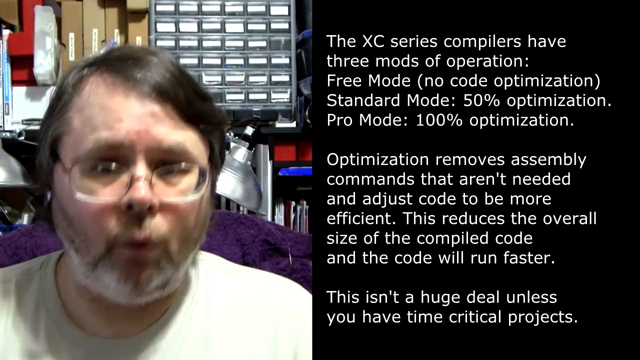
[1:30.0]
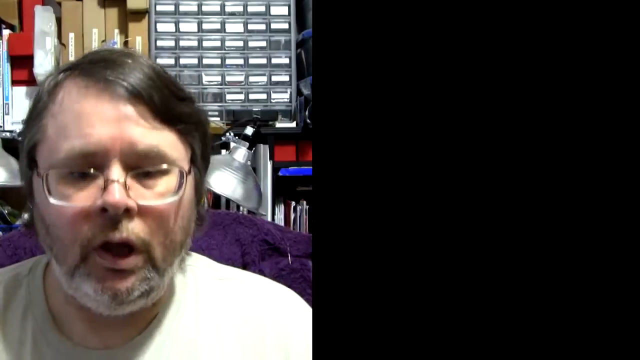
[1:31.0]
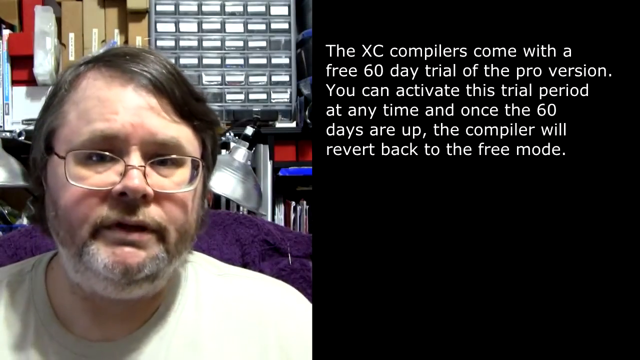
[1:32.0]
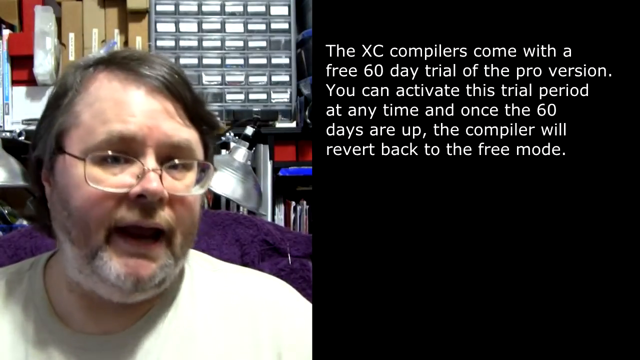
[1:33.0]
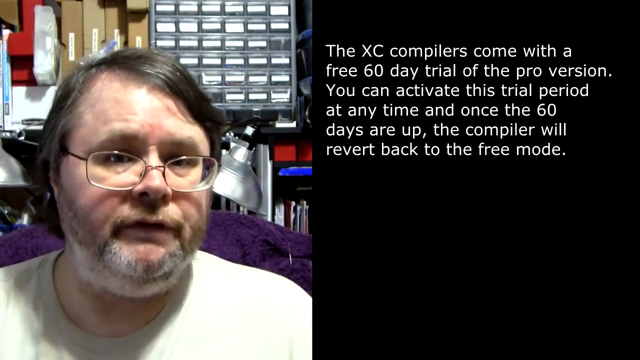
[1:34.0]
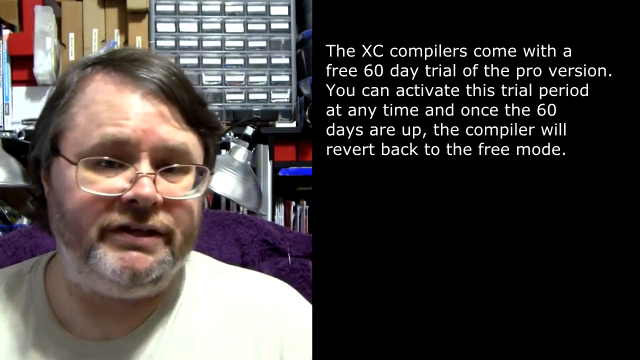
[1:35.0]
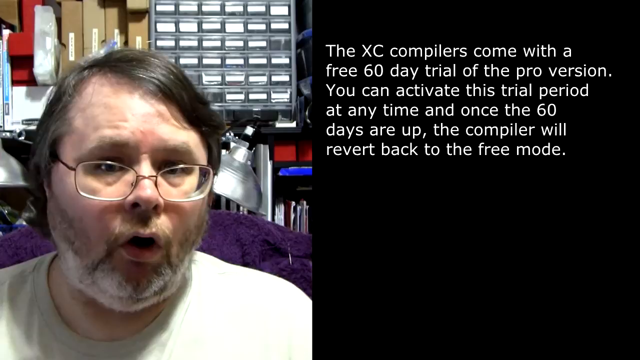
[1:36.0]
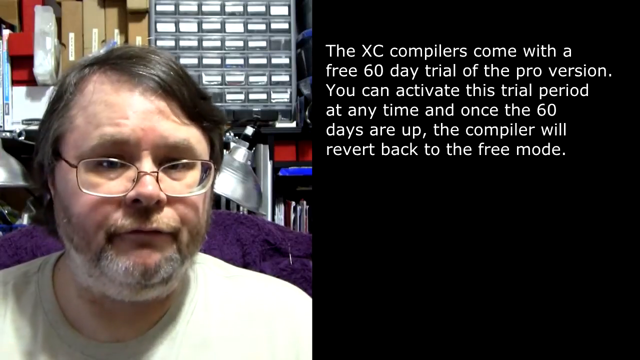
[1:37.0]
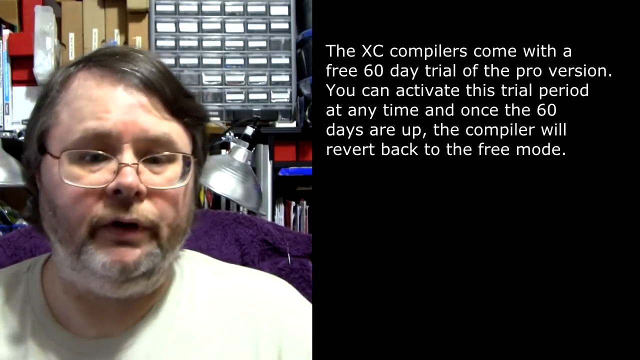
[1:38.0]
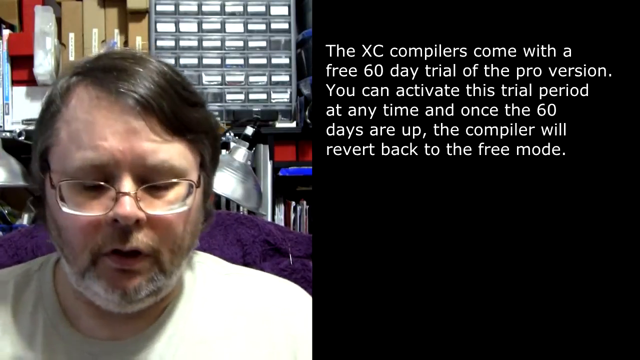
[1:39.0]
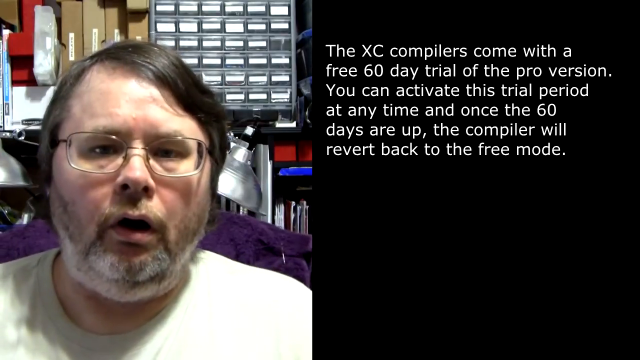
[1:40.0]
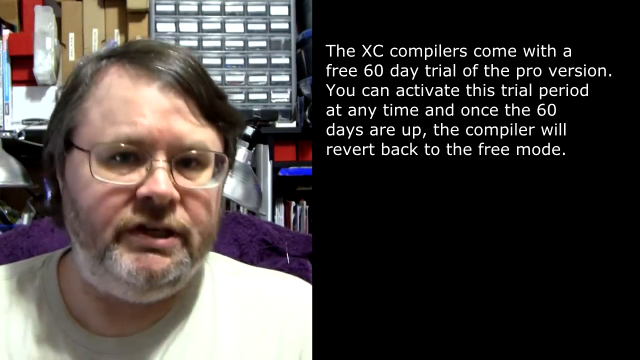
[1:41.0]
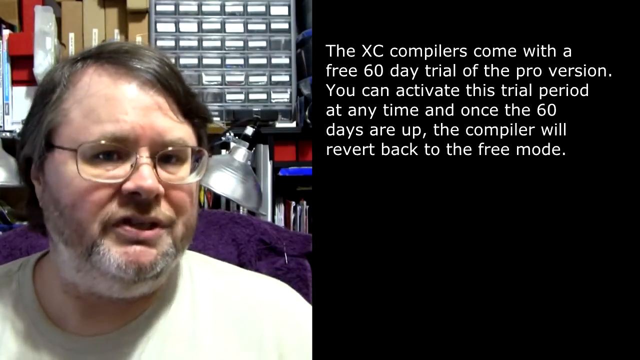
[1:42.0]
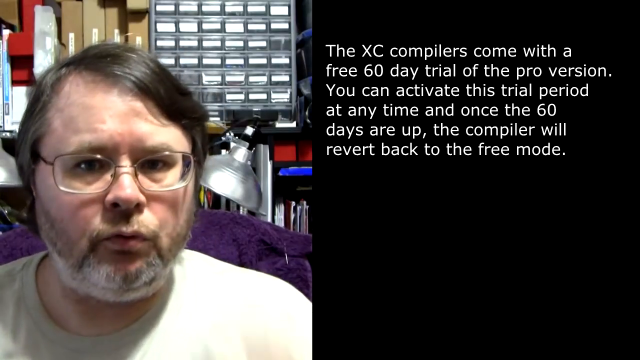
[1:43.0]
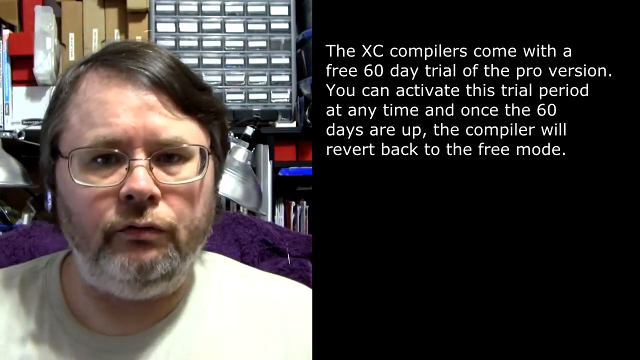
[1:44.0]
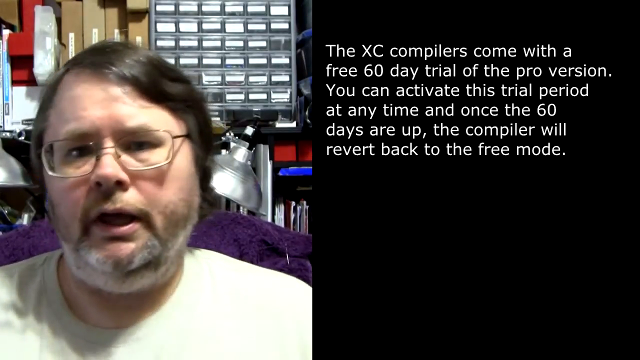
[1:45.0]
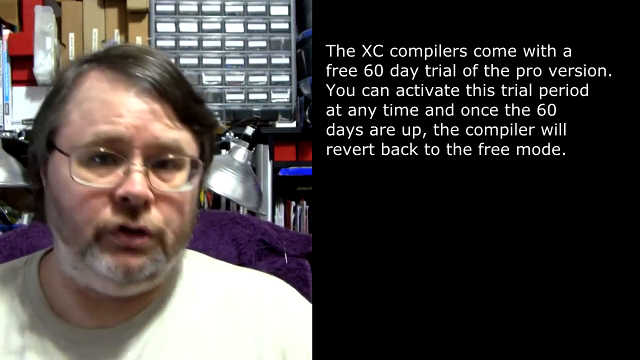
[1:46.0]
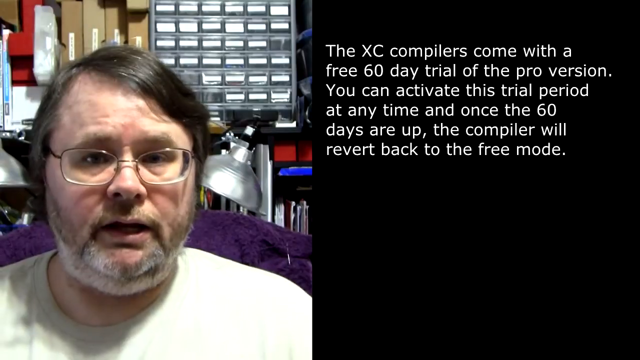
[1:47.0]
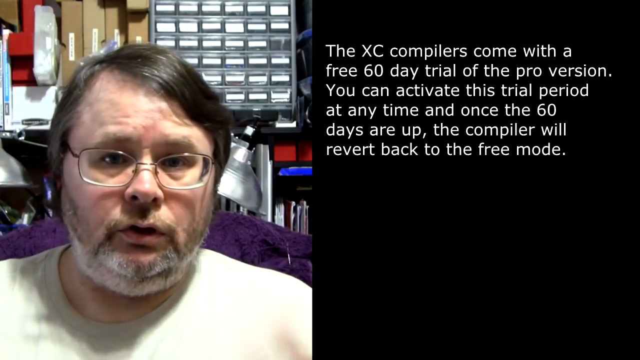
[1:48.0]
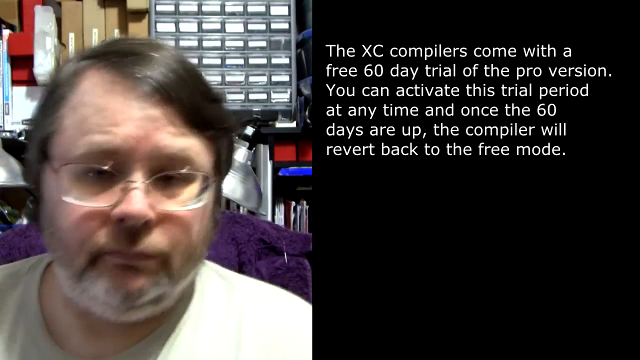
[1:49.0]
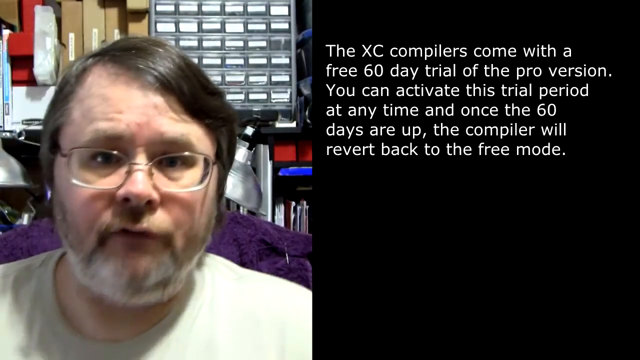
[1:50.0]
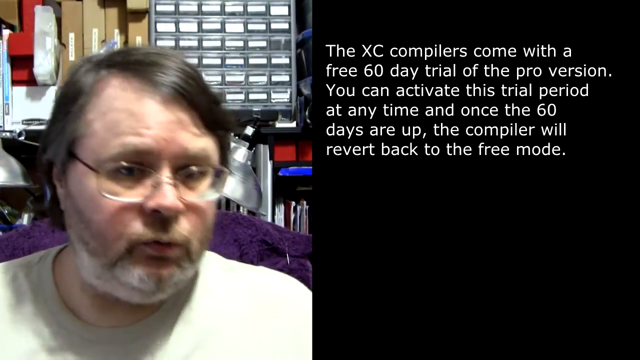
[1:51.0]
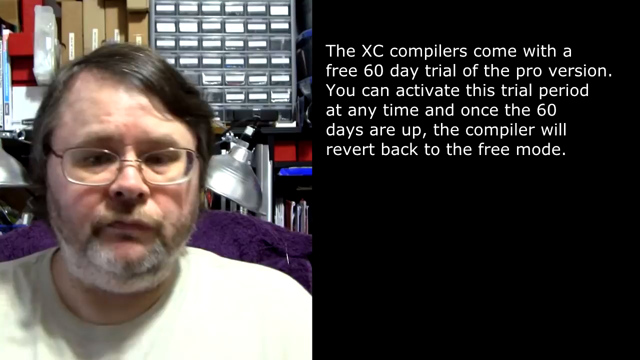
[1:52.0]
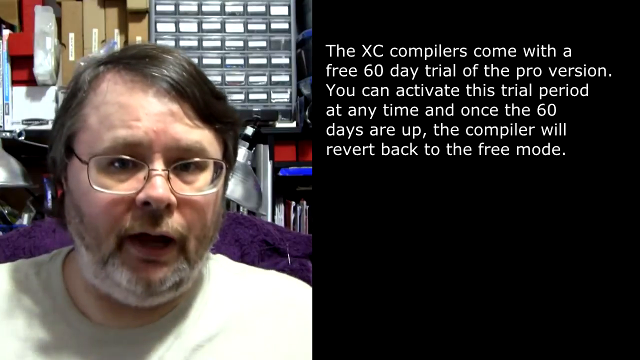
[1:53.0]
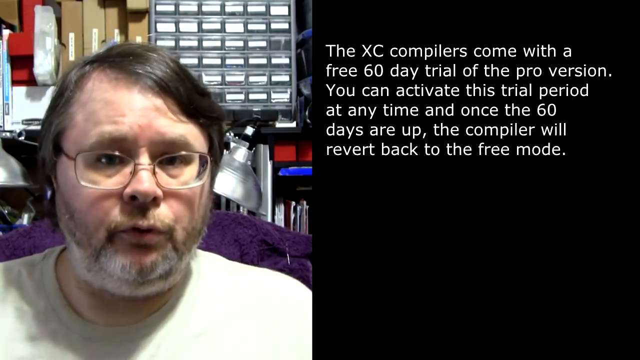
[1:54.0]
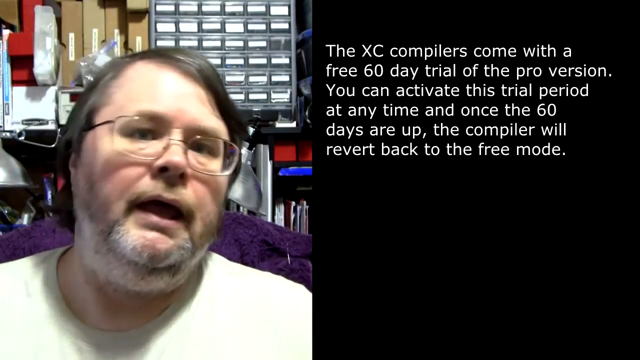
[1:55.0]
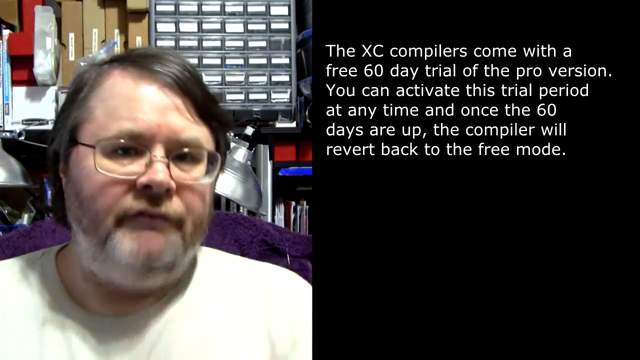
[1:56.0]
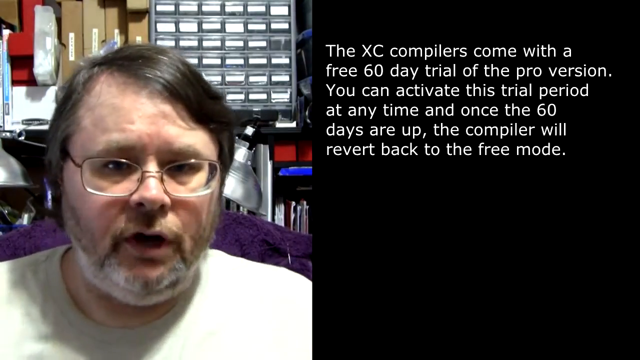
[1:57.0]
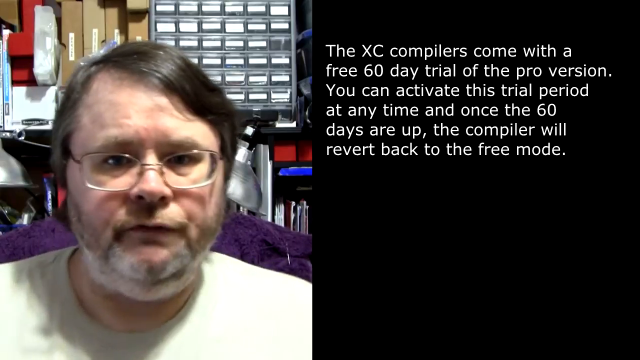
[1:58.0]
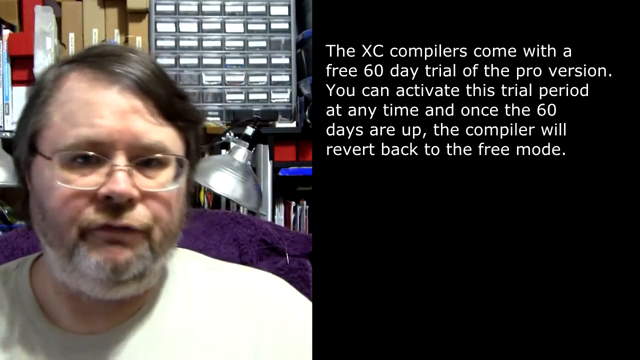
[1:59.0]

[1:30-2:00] The speaker moves and bobs his head about a lot more. The message on the right side of the screen has changed and now reads: "The XC compilers come with a free 60-day trial of the Pro version. You can activate this trial period at any time and once the 60 days are up the compiler will revert back to the free mode." He is sitting in what looks like a purple chair with a somewhat satin appearance at the top. On the shelf behind him there seem to be some type of miniature drawers or panels, apparently with white labels facing outward. His haircut is fairly standard: not long and not a buzz cut, short and close to his head, well above the shoulders. Toward the end he moves his hands more and more, and he seems to be inhaling and using more of his chest to speak.